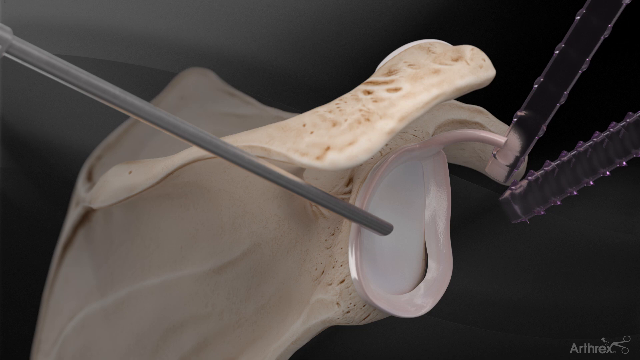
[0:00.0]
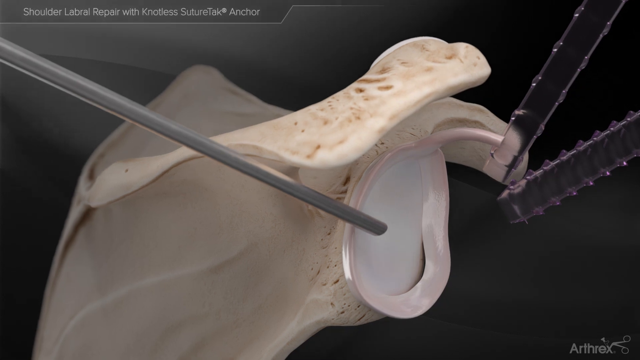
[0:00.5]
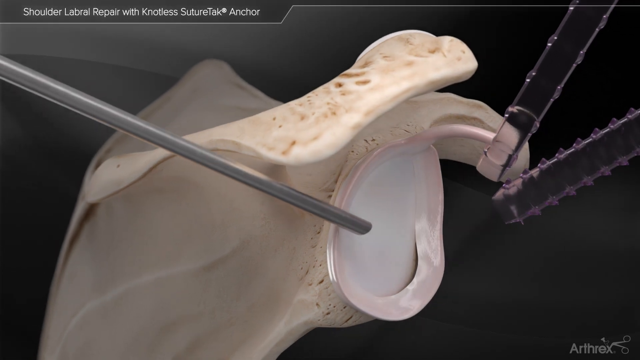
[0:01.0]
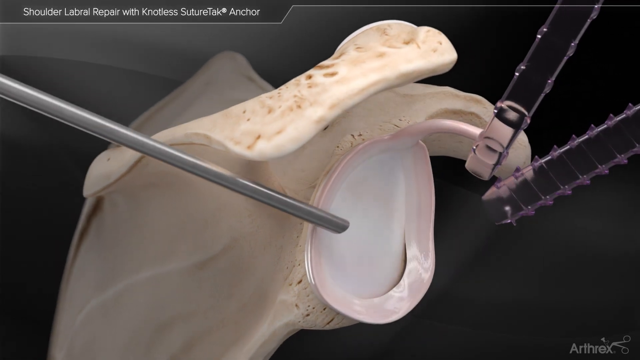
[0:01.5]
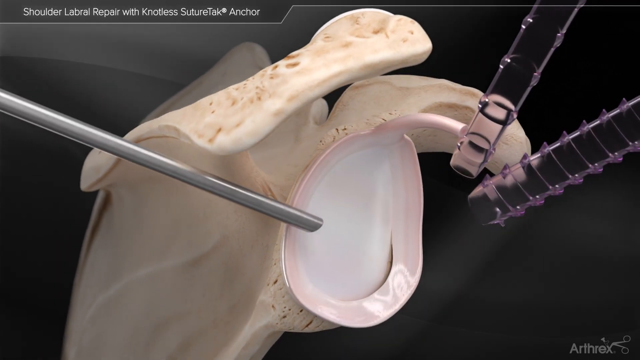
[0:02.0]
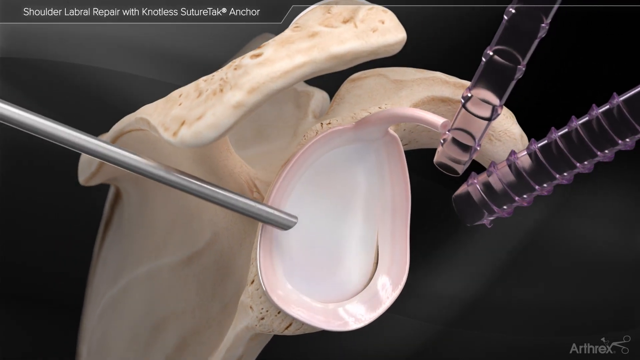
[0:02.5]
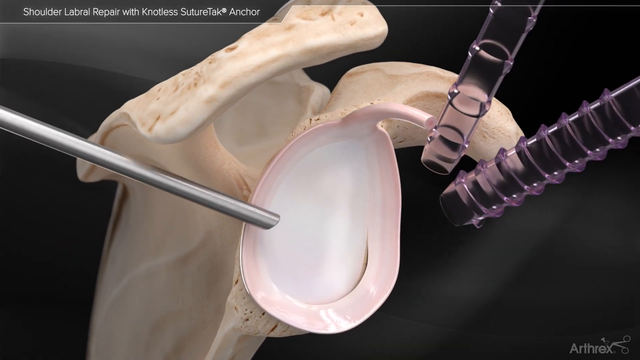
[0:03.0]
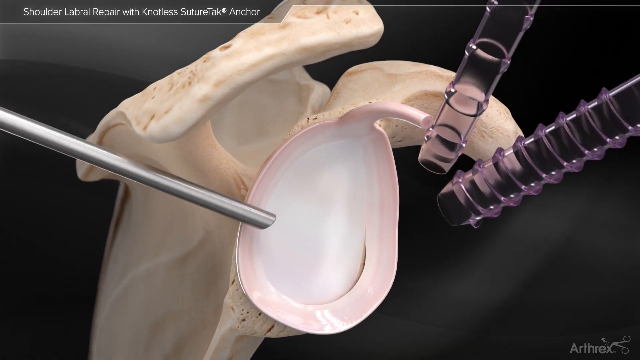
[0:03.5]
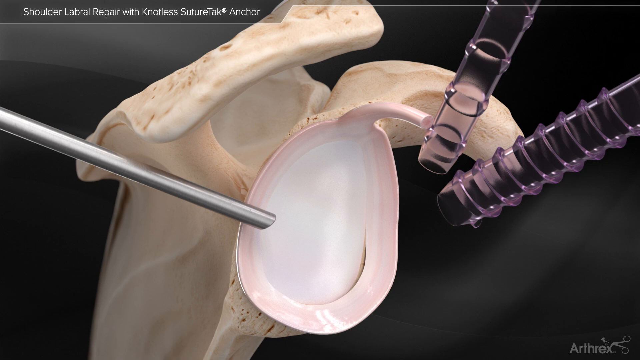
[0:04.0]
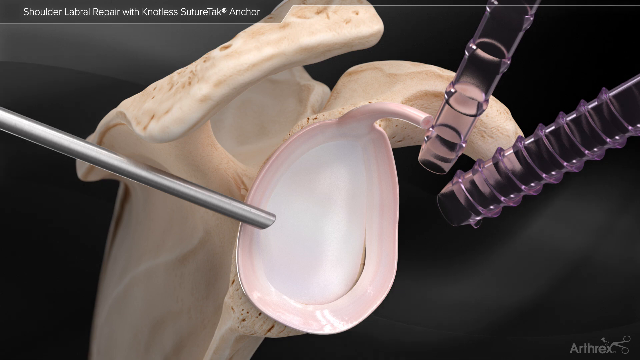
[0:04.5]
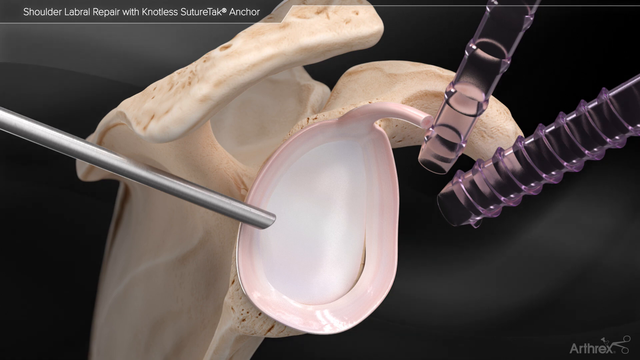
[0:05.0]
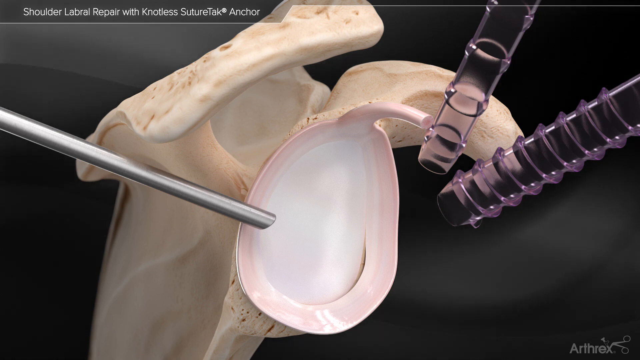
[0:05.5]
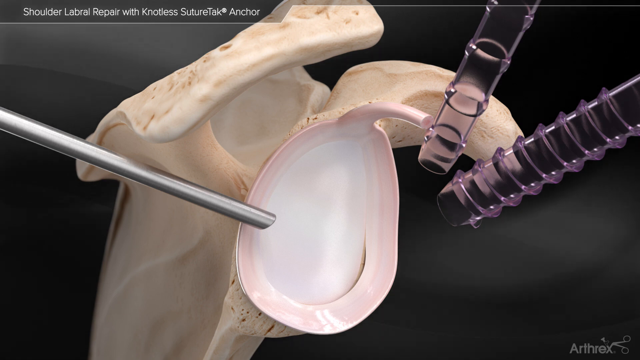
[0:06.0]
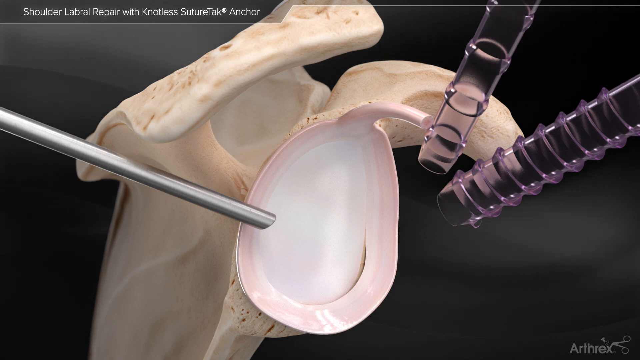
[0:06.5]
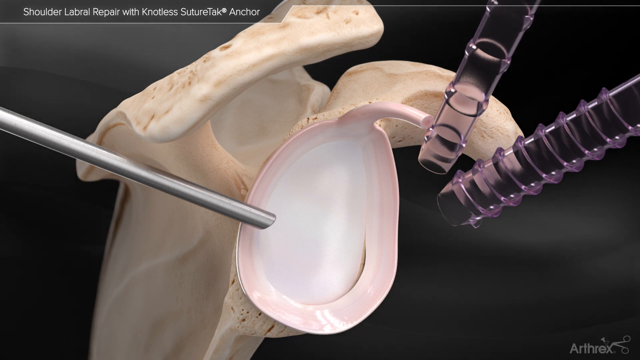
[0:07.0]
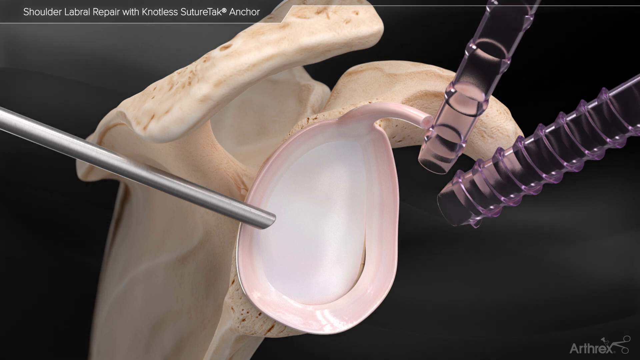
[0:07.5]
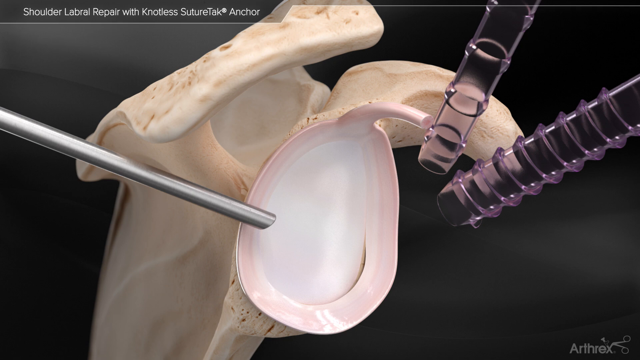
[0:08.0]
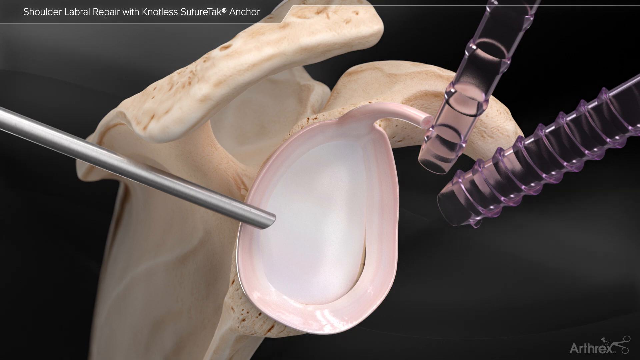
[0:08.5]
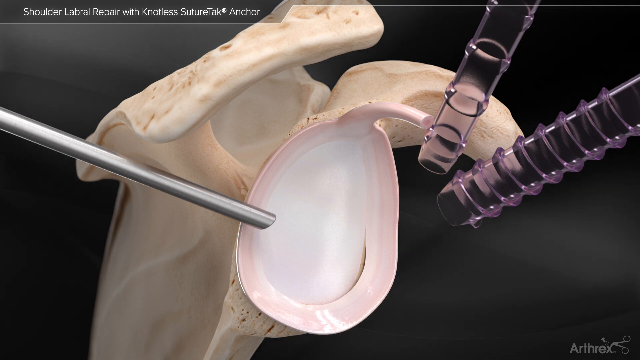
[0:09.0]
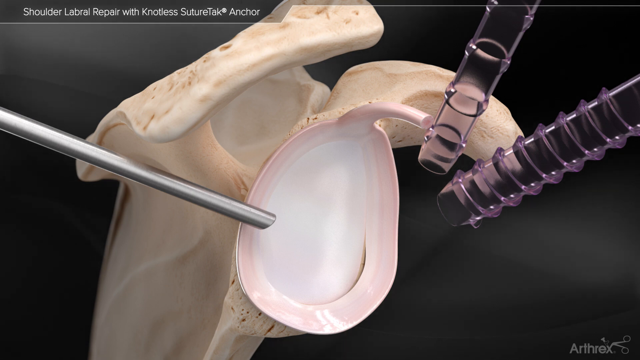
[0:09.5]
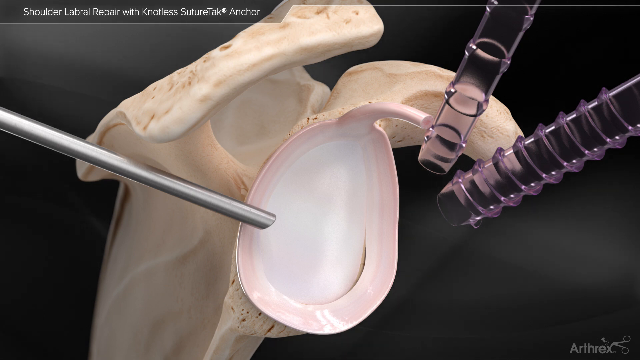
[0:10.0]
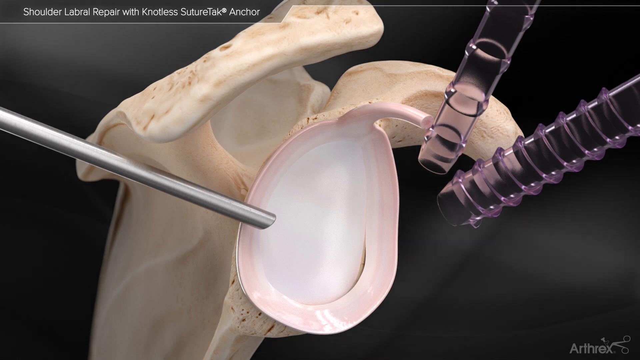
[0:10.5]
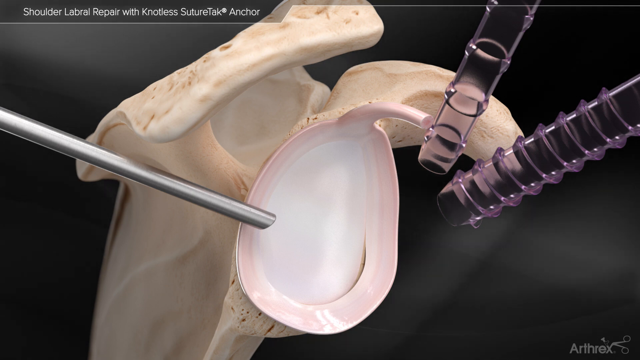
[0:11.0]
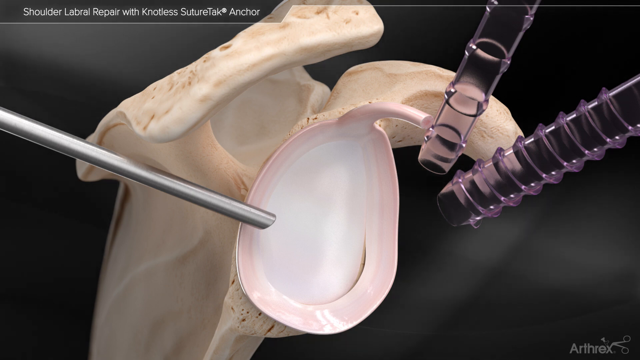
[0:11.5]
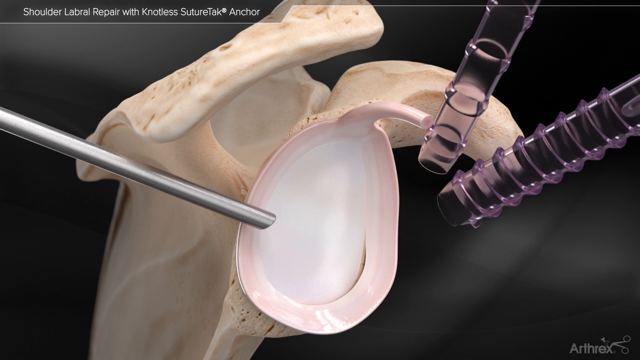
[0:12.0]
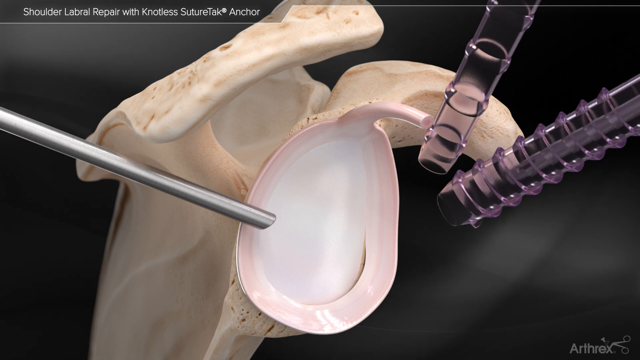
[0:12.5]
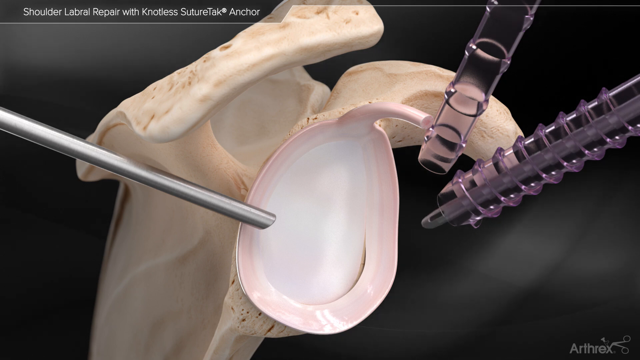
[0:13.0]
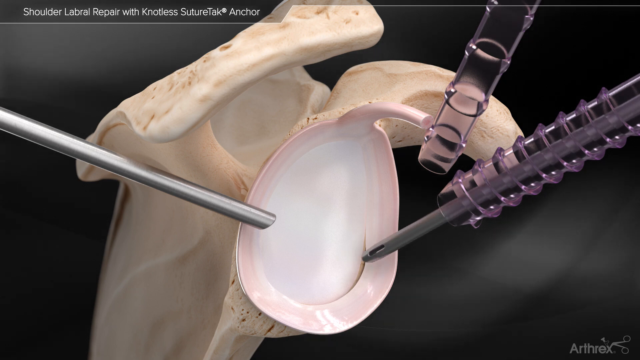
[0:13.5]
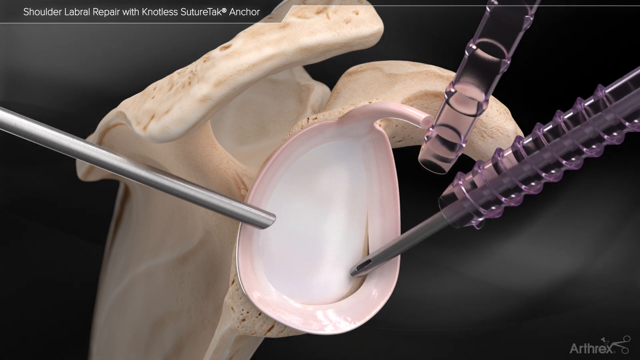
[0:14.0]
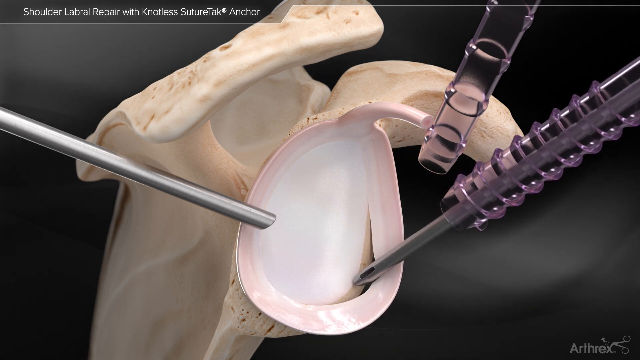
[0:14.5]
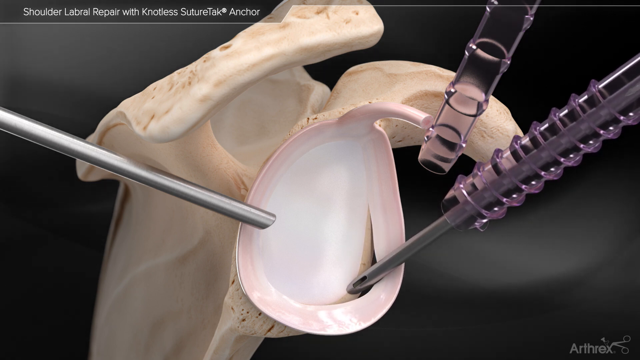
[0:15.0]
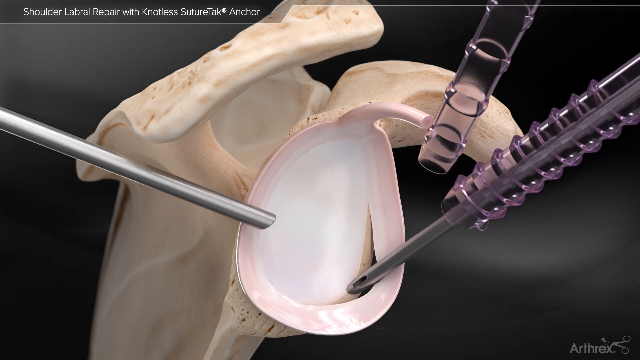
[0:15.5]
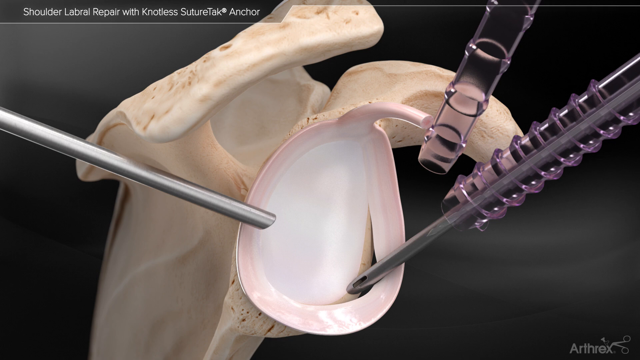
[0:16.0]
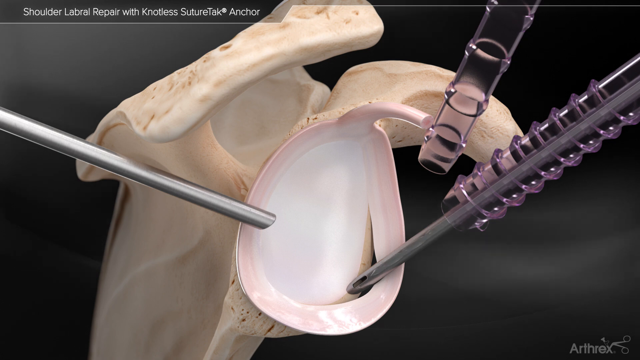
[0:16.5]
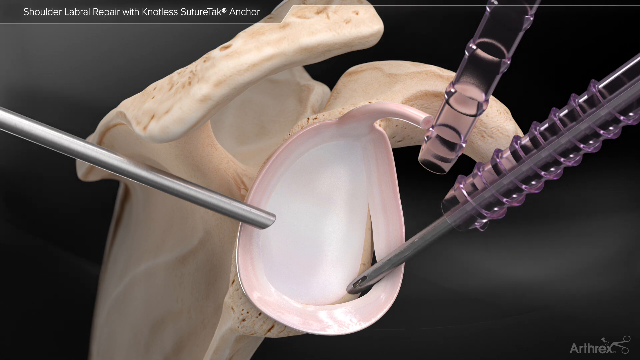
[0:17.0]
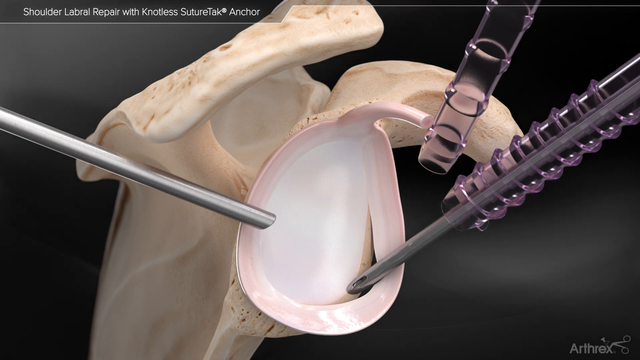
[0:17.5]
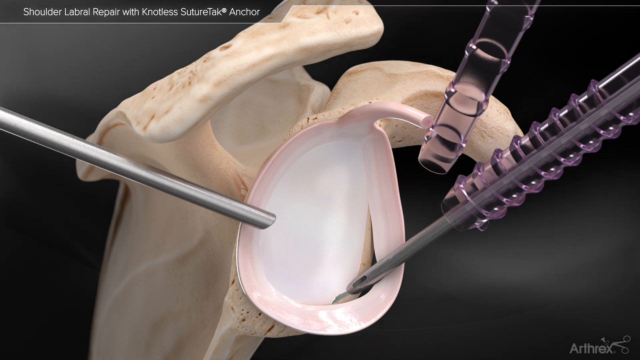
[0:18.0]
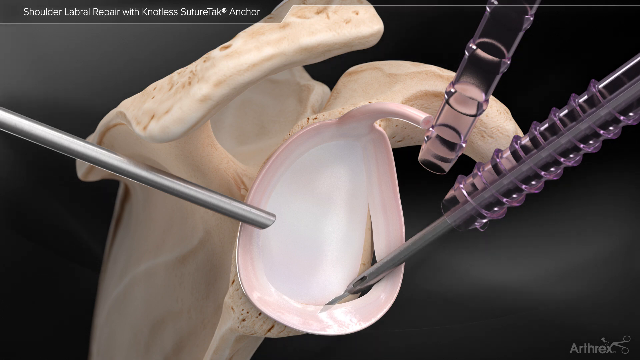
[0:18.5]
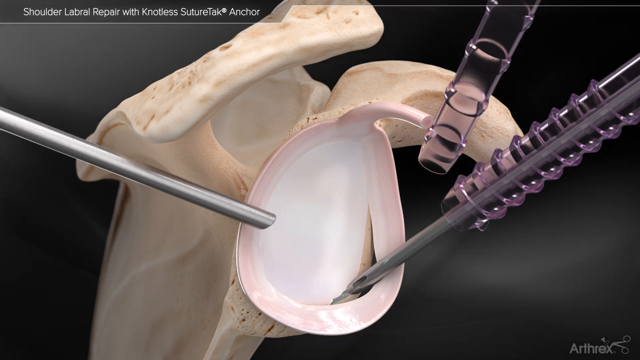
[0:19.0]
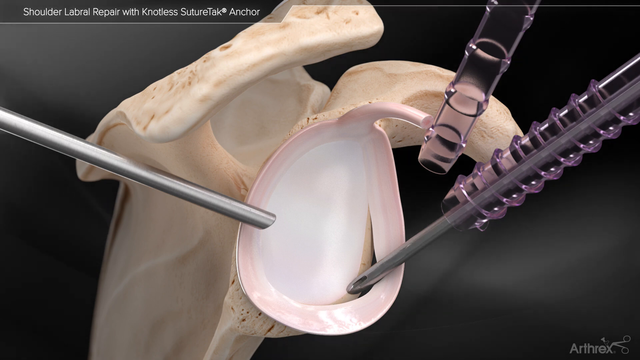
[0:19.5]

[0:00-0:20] What looks like an image of a bone, possibly the inside of a bone, appears against a swirling black background. A metal piece goes inside the bone, and some plastic is around it; there are two purple plastic pieces. Out of one of the plastic pieces, another metal piece is inserted close to what is apparently the bone, and liquid is shot through this metal piece. The liquid comes out of a small hole in it and goes into the white part of the hollow bone, possibly into the inside of the bone or possibly into the ear canal; it is unclear which. Overall it looks like some type of bone with a metal piece already coming out of it.